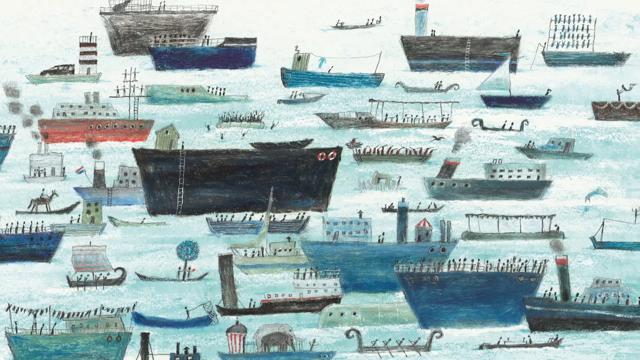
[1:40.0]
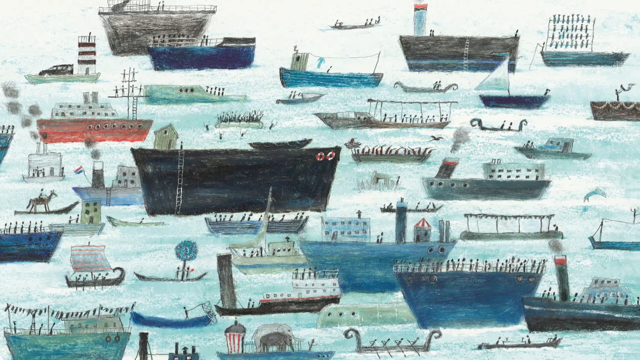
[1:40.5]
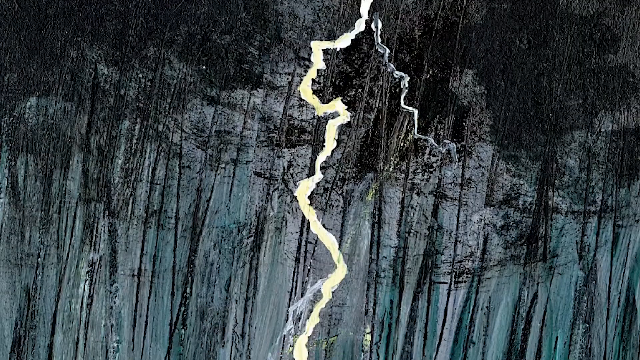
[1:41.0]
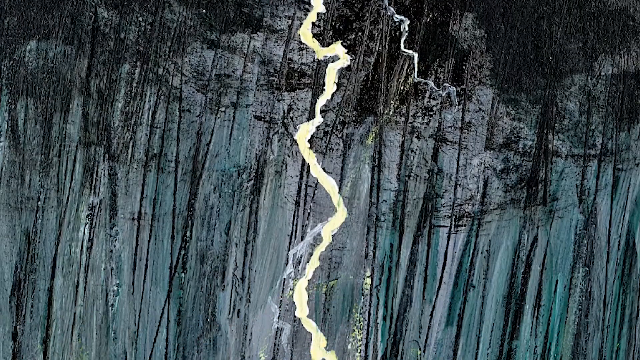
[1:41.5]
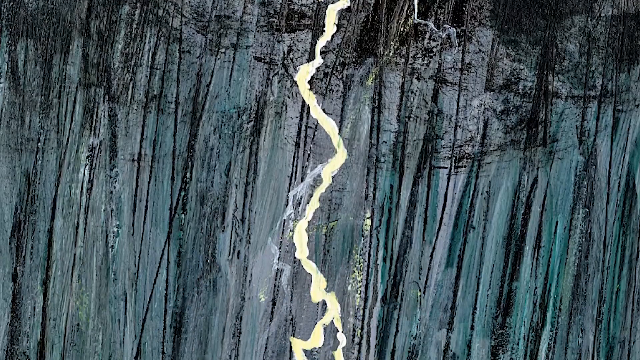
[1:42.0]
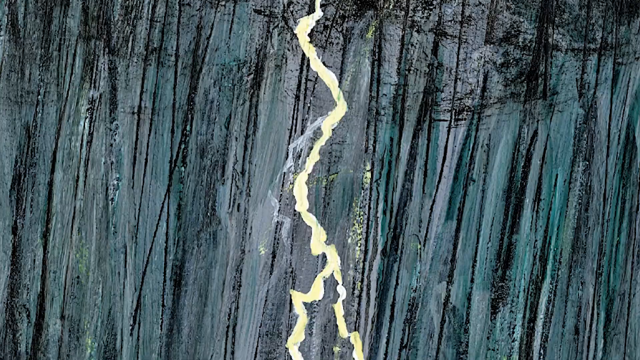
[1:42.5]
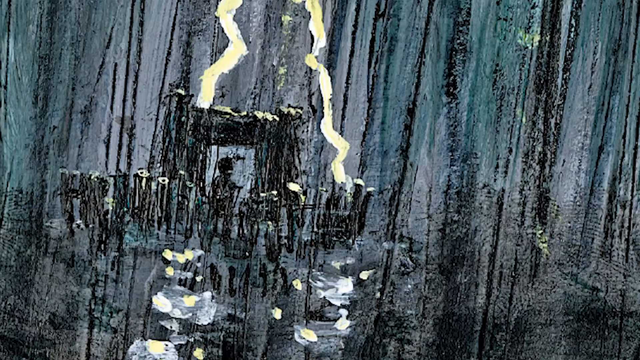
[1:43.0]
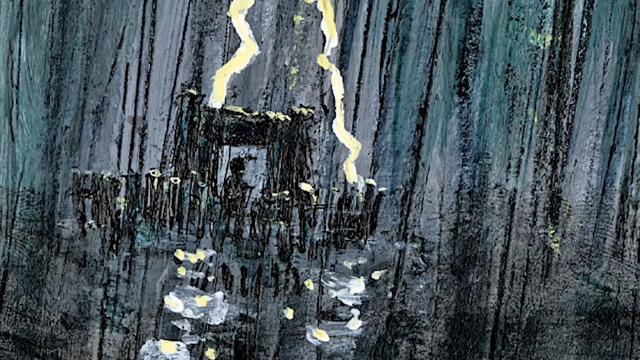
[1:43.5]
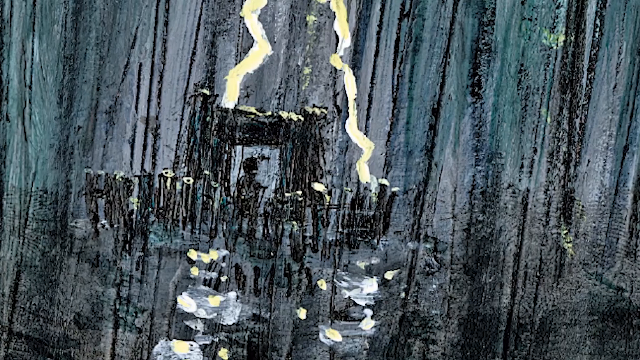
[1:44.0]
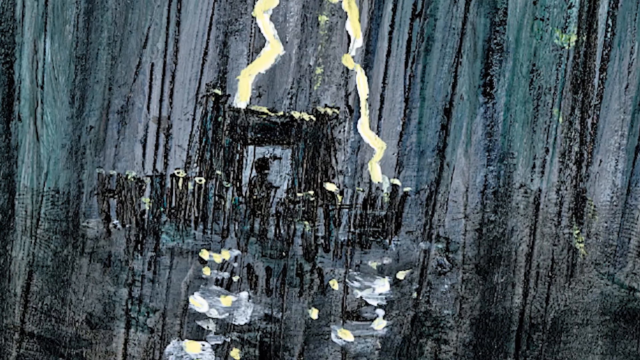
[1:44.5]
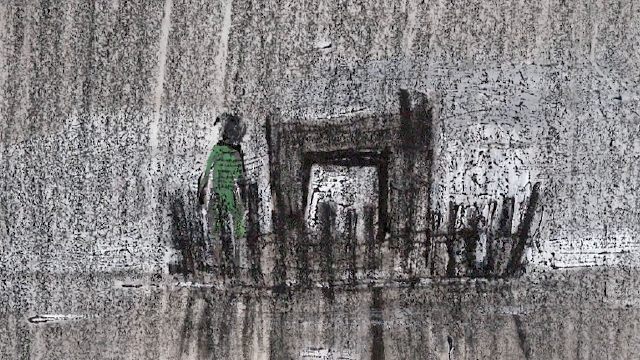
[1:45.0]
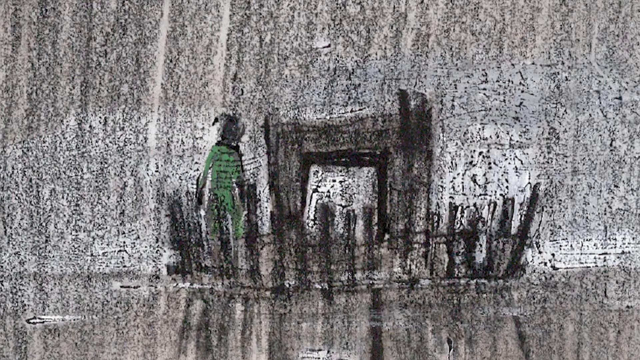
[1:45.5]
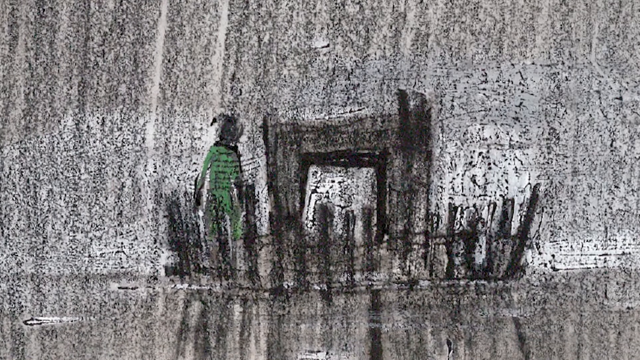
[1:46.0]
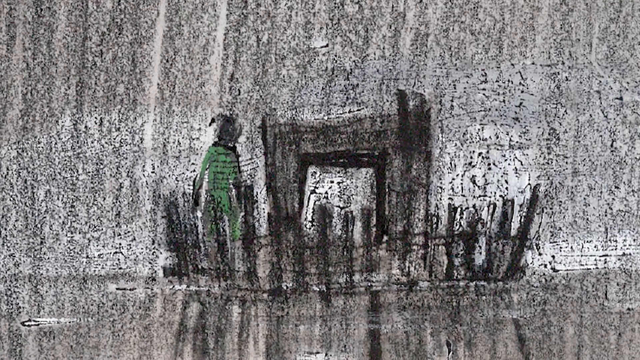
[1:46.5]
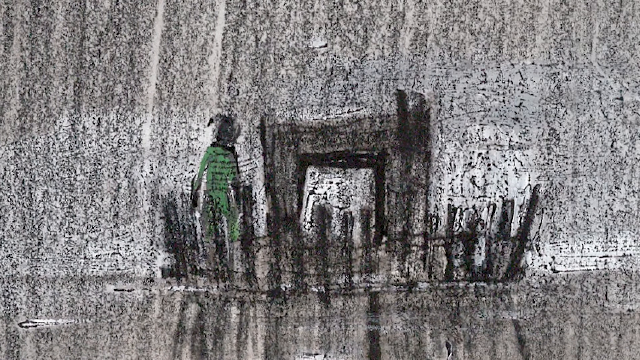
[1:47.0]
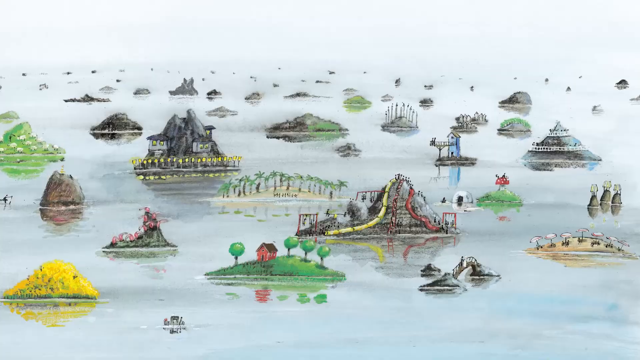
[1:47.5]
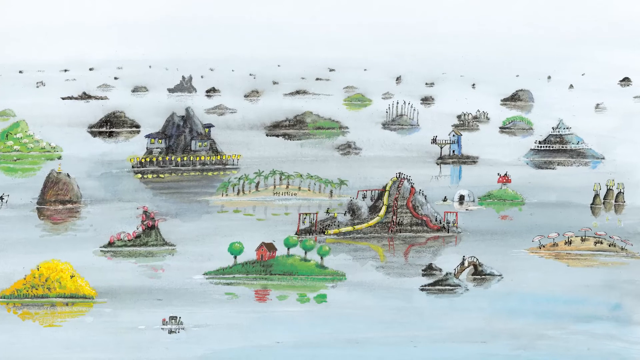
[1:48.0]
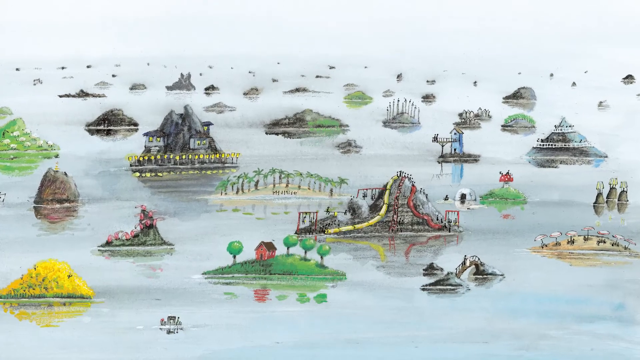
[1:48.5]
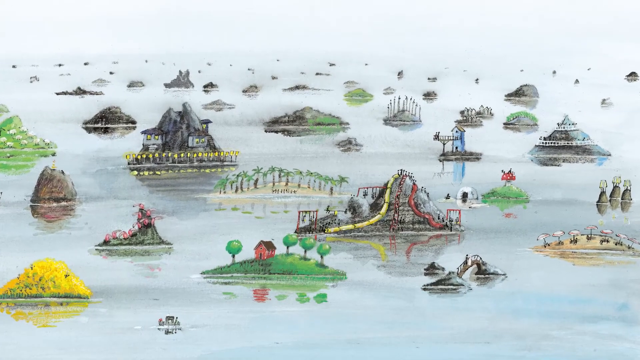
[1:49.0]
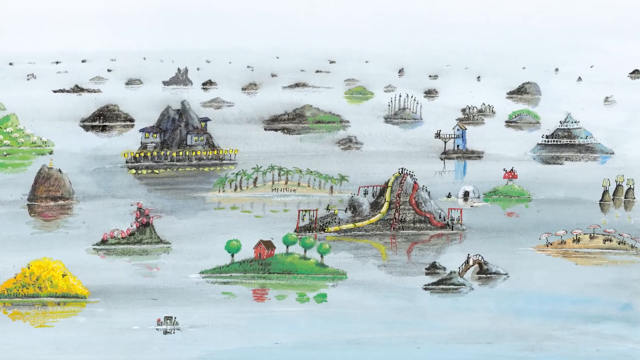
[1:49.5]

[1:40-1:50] The picture with the lightning striking downwards appears, and the camera slowly pans down to reveal the same figure in a little houseboat on the ocean, which is what the lightning is hitting. A close-up follows of the little figure on her houseboat, with everything behind her looking gray and staticky, maybe a deluge of rain. Then an image shows many tiny islands, each with a different theme: one is covered in sheep, one has a little house with some trees, one looks like a water park, and one looks like a beach scene, all whimsical little islands.